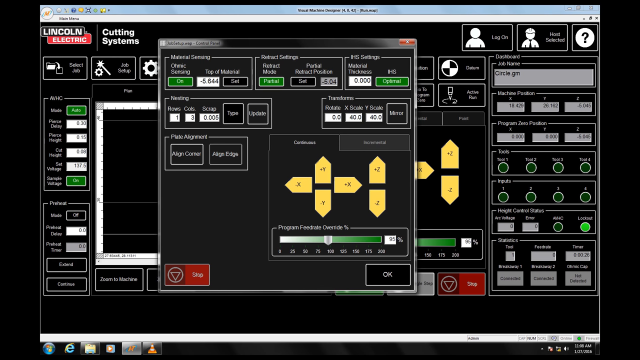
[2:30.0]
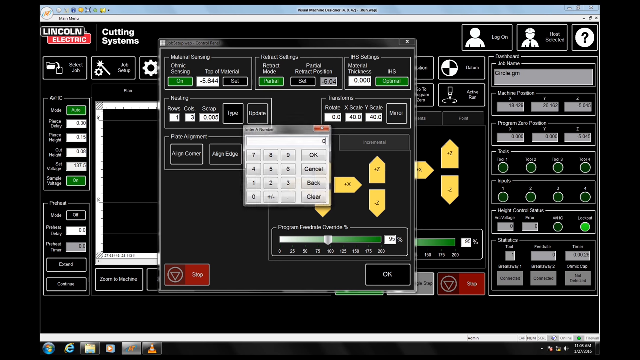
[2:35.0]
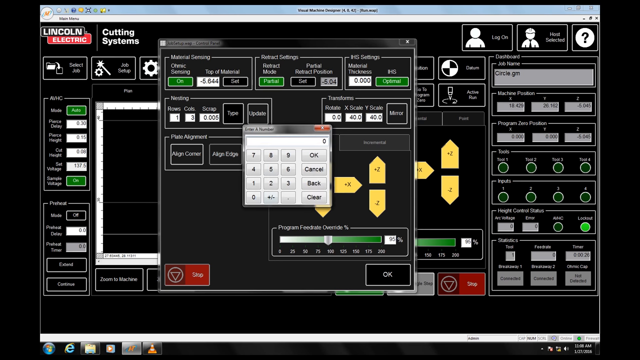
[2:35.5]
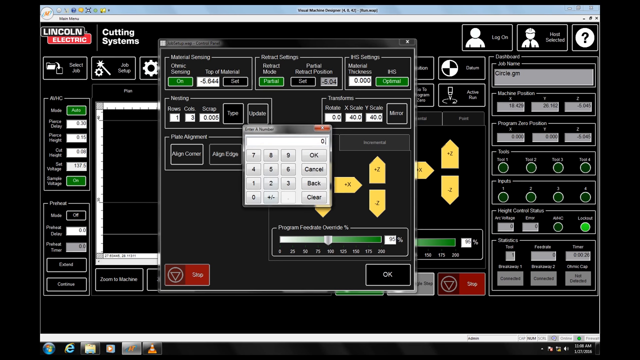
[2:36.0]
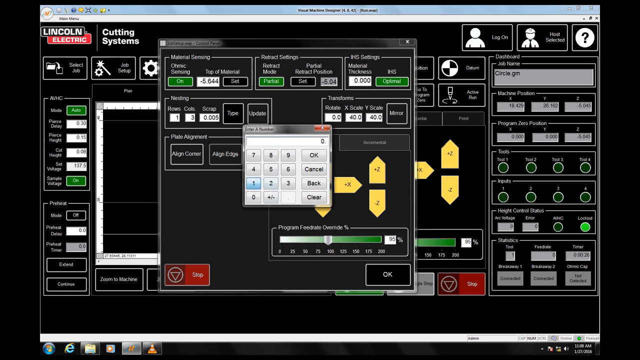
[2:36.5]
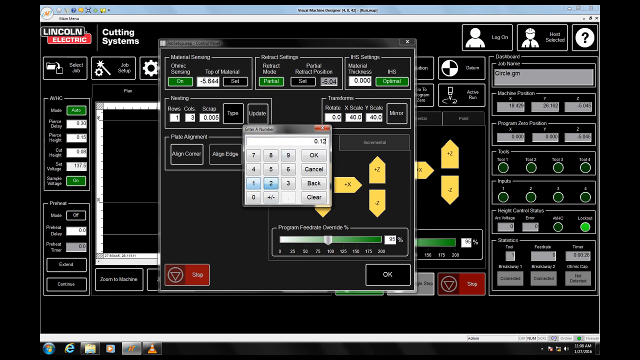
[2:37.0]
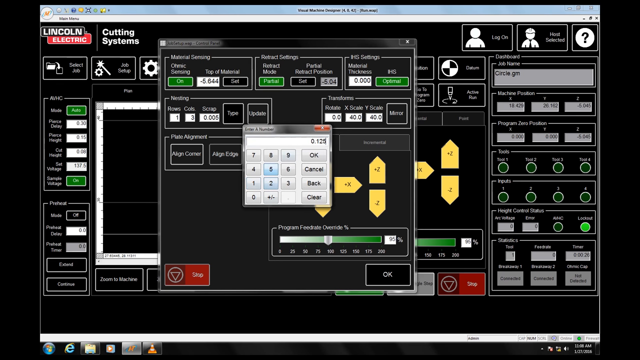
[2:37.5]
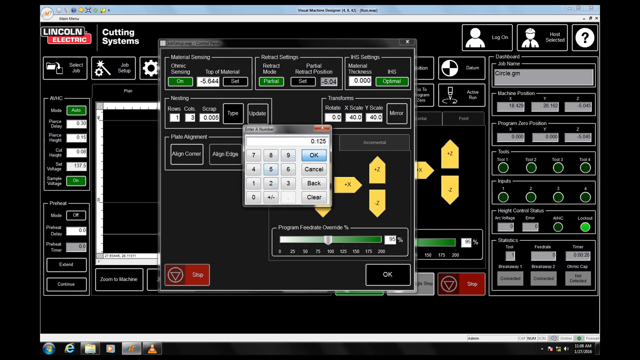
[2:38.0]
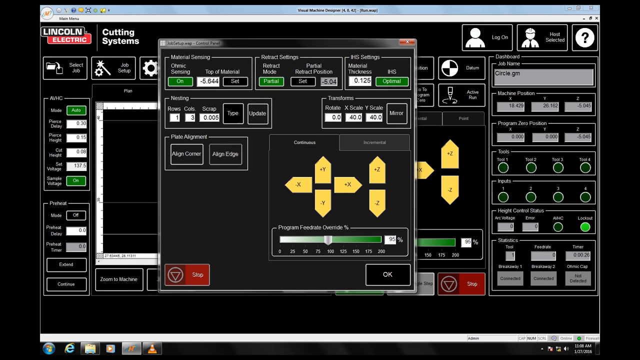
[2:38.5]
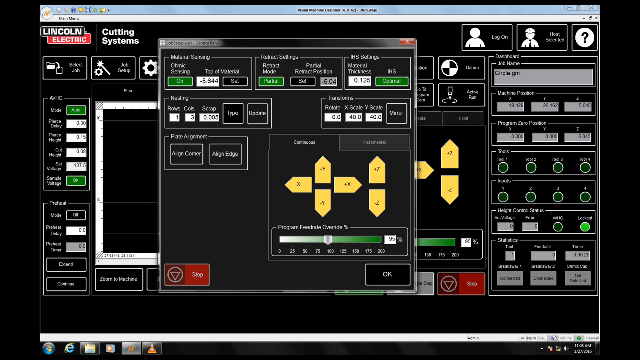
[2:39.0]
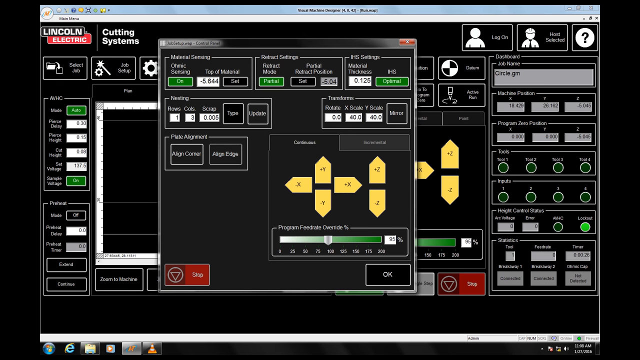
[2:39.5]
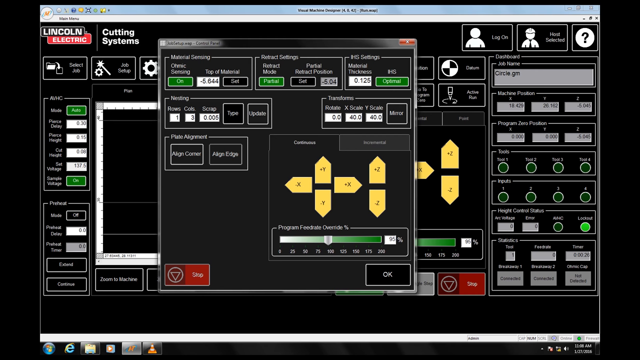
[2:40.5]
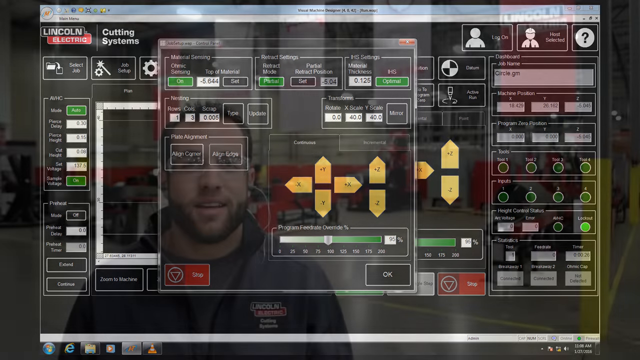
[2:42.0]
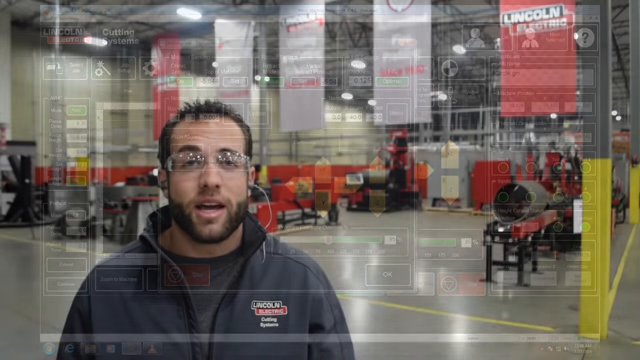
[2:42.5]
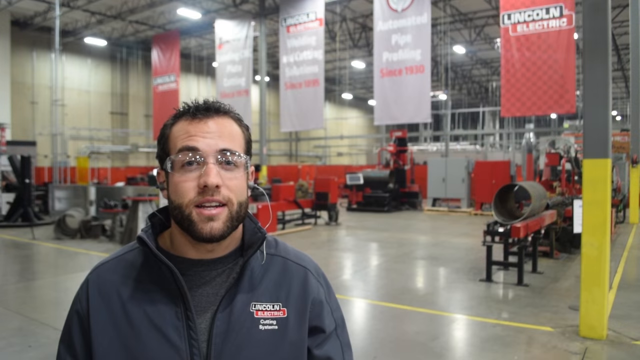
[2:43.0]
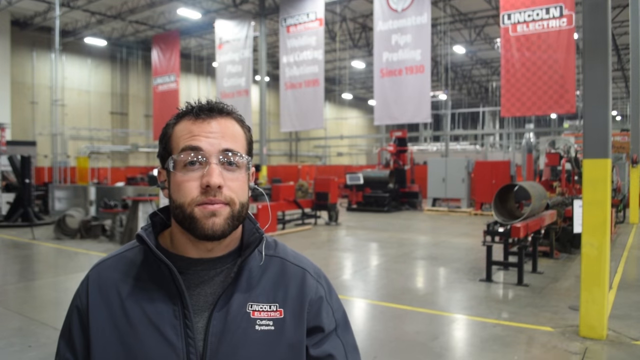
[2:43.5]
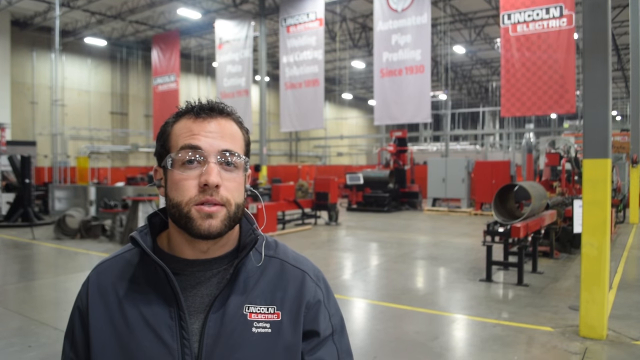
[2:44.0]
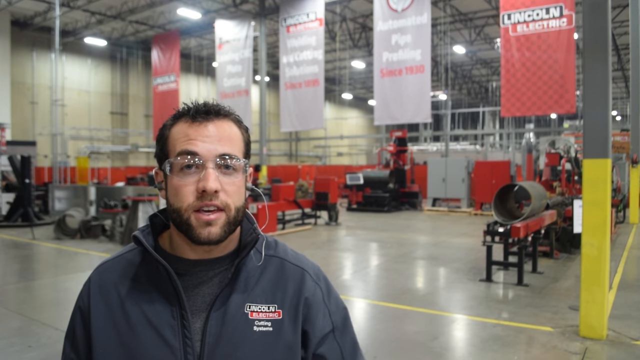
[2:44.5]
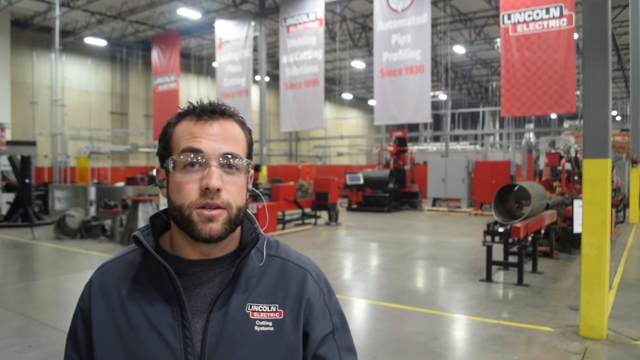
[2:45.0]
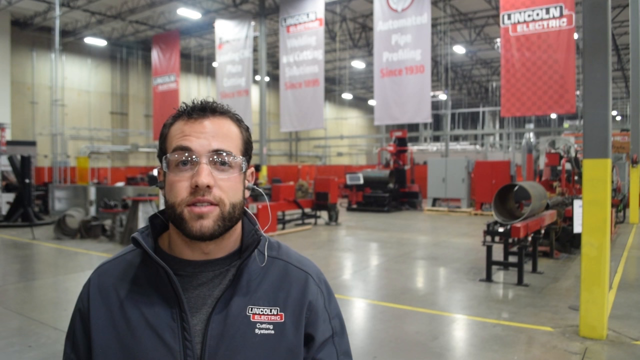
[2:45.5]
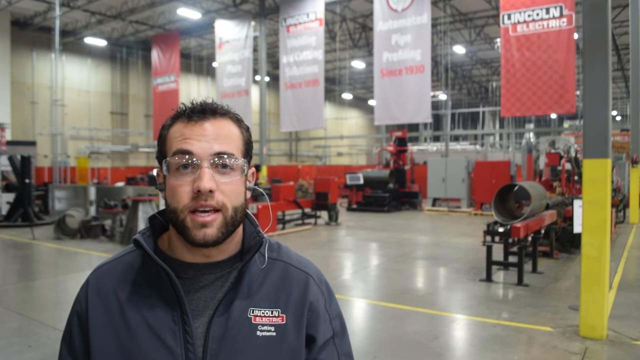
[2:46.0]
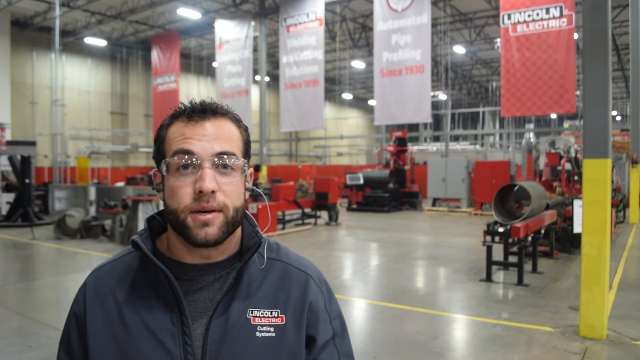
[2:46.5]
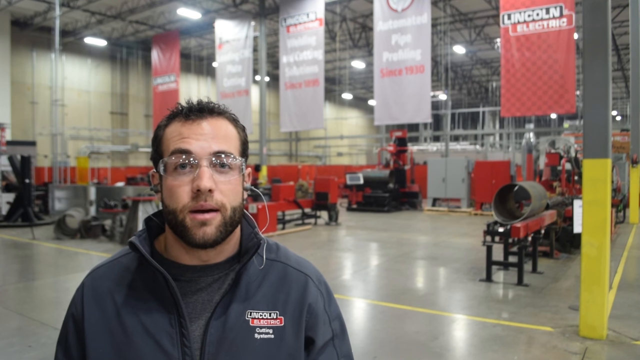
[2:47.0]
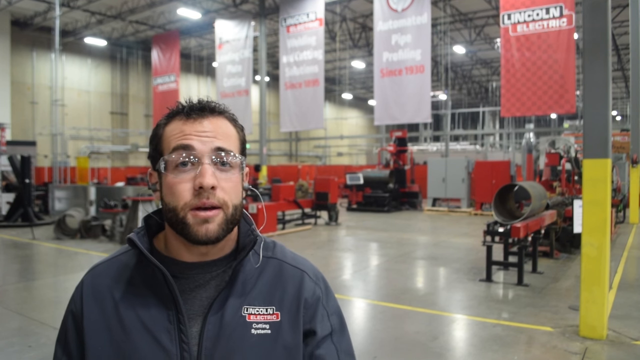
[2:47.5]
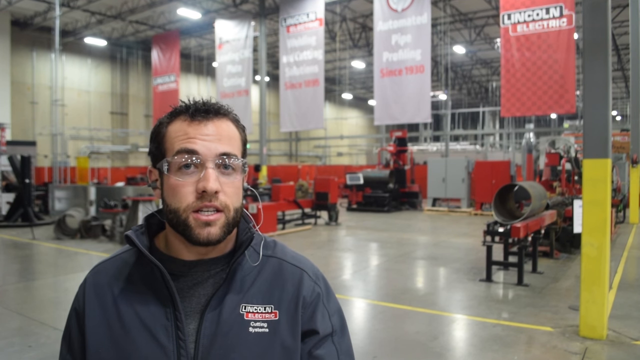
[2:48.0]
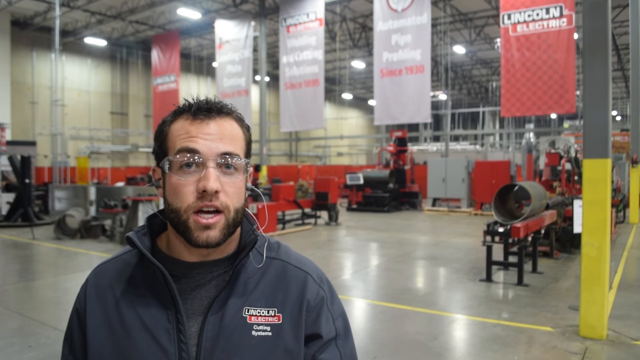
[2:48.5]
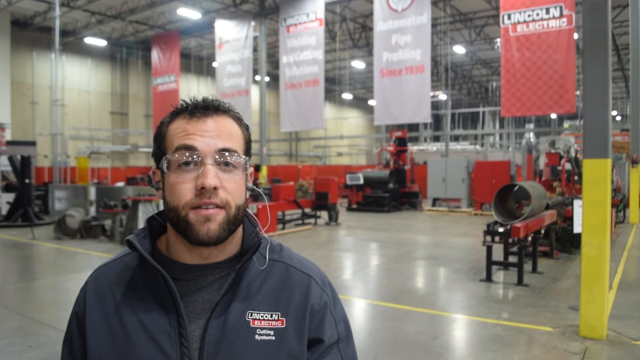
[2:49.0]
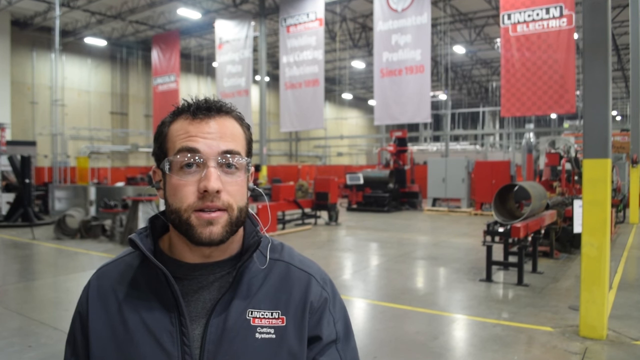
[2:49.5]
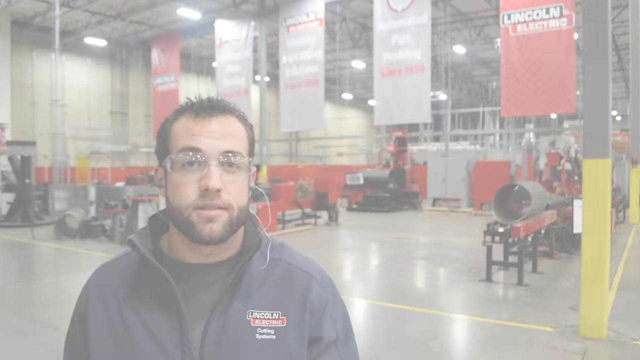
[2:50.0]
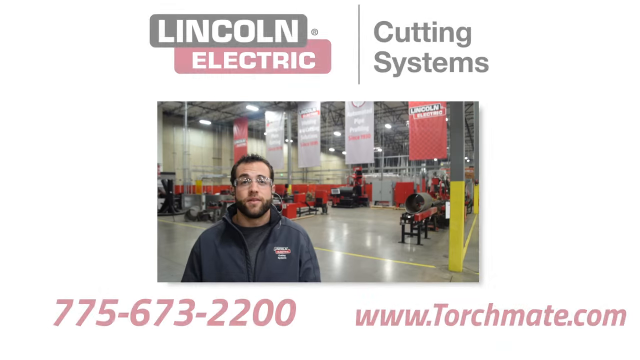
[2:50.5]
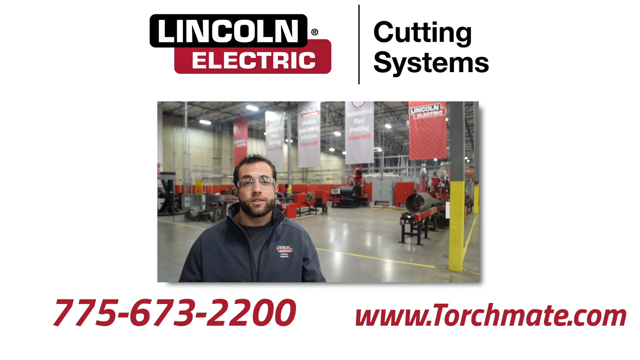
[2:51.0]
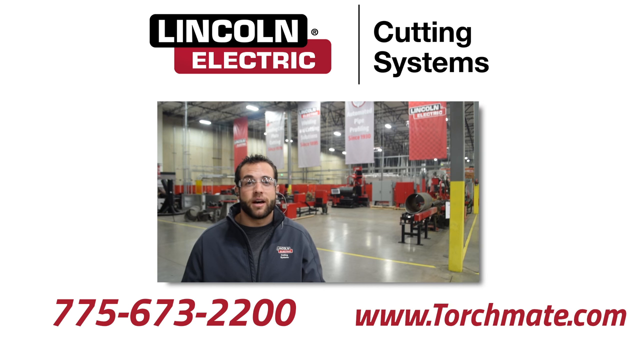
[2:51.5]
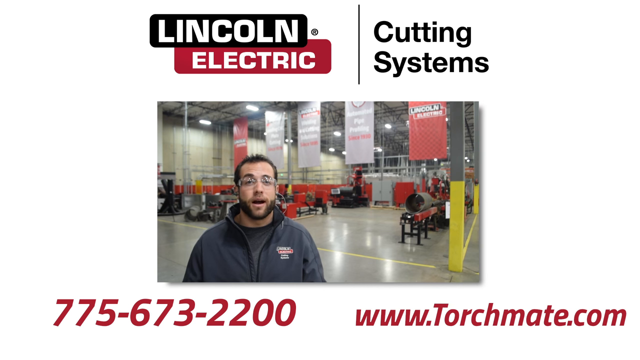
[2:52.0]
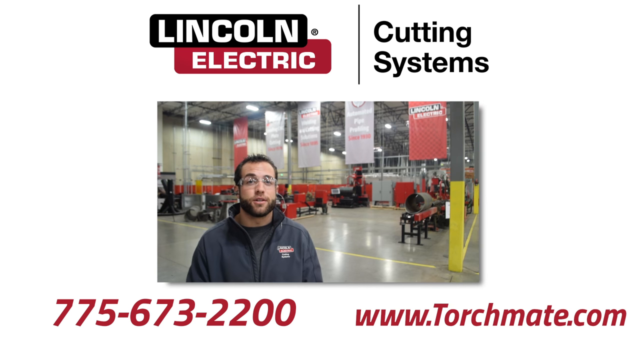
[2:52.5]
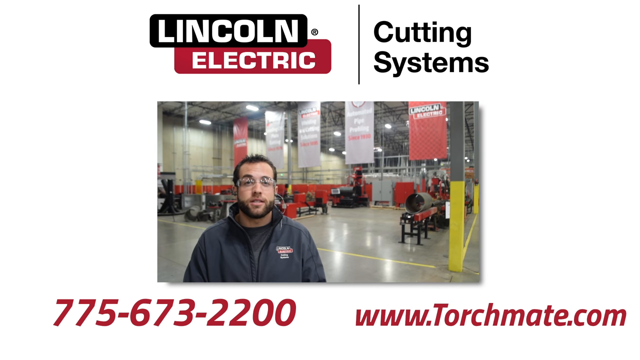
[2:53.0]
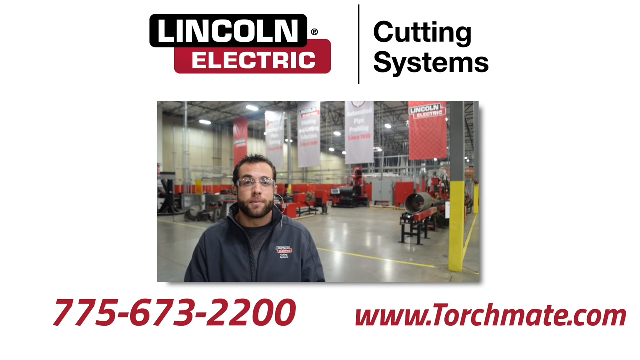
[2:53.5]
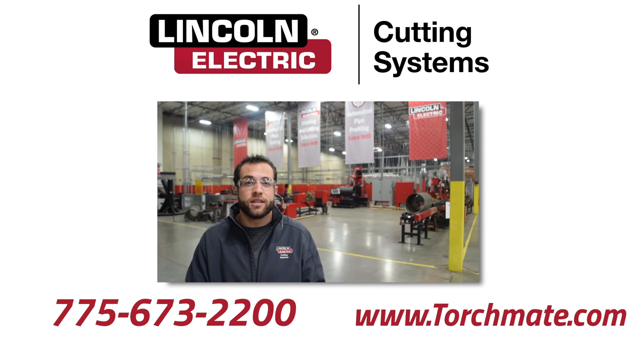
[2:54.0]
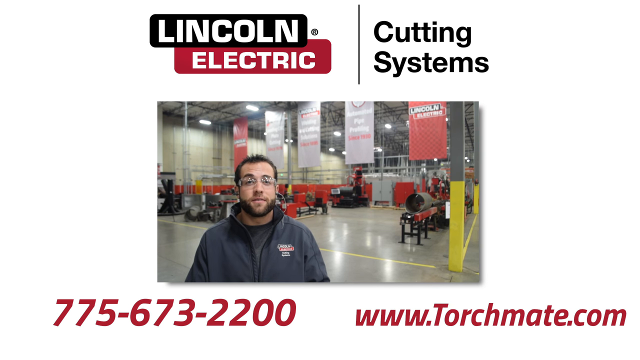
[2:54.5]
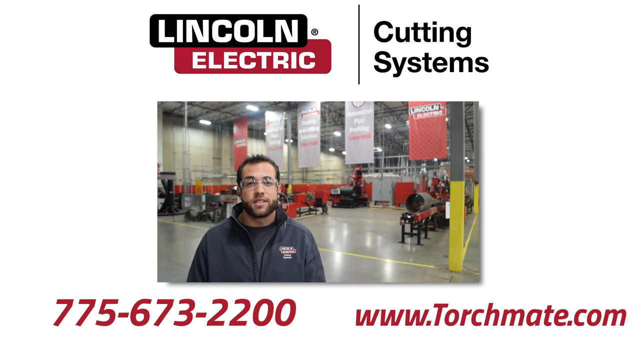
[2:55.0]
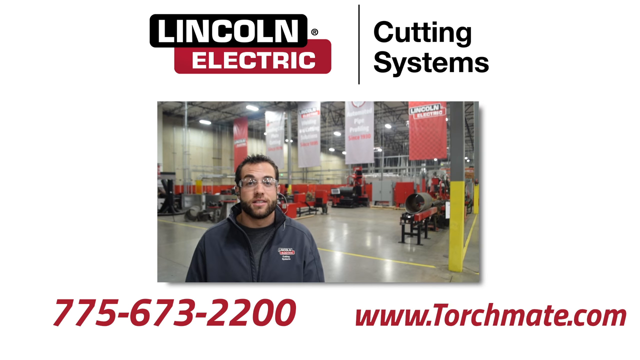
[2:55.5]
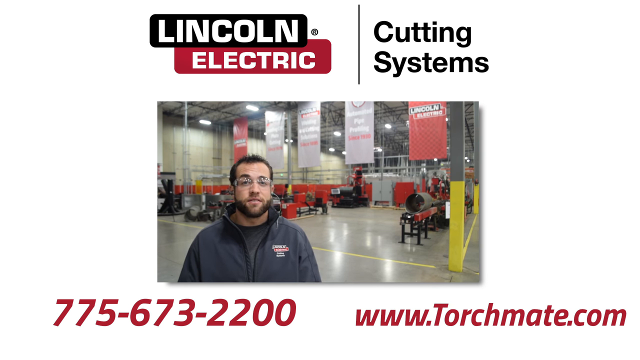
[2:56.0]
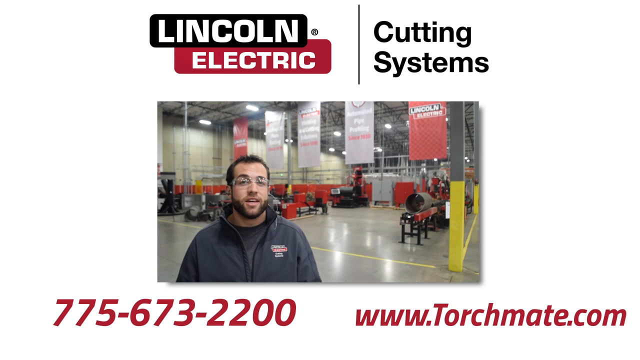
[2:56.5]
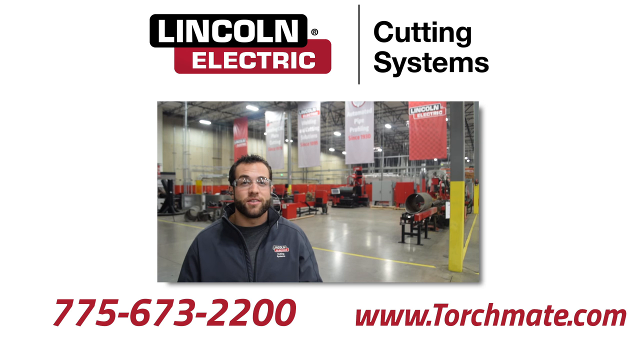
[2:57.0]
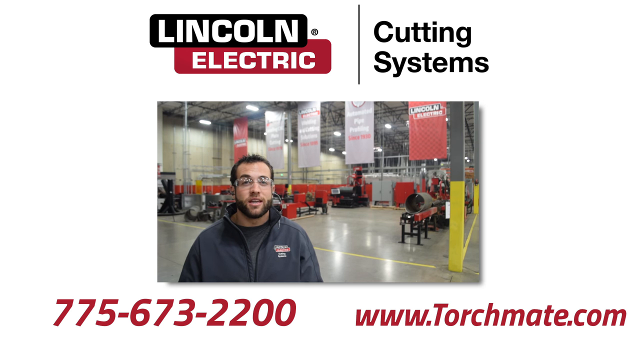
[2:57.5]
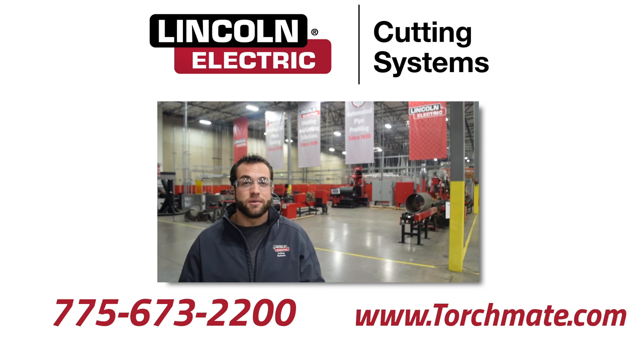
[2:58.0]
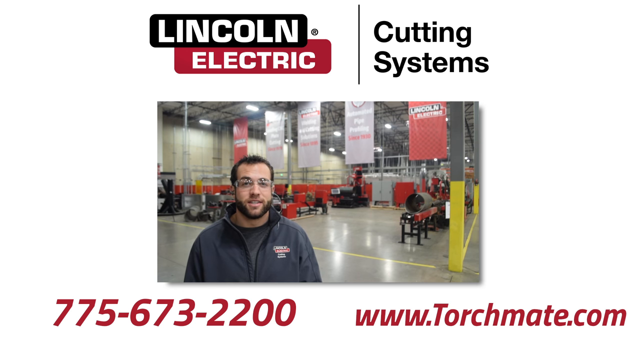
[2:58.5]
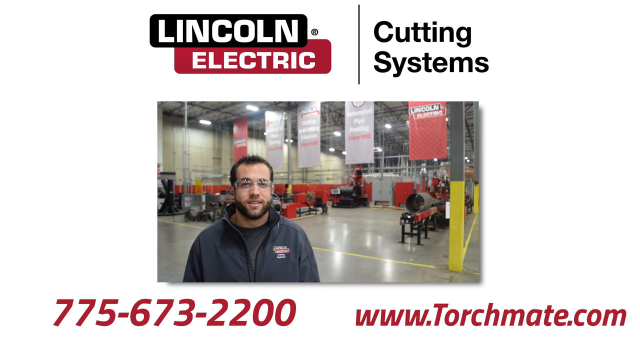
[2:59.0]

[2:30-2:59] "Lincoln Electric cutting systems" is shown. Mark Humphries is talking with banners behind him: a Lincoln Electric banner, one red and three gray in the middle. The logo appears with "cutting systems" beside it. A phone number is shown that appears to be 775 673 2200, and at the lower right of the screen is the address "www.touchmate.com". The Lincoln Electric cutting system page is then shown; the cursor moves and the number 01.125 is typed. The screen also shows "okay", "cancel", "back" and "clear" along with the digits 0 through 9, and there is a red button to proceed. The four yellow arrows appear, with two yellow arrows pointing upward and downward beside them, along with "cutting systems" and "Lincoln Electric".